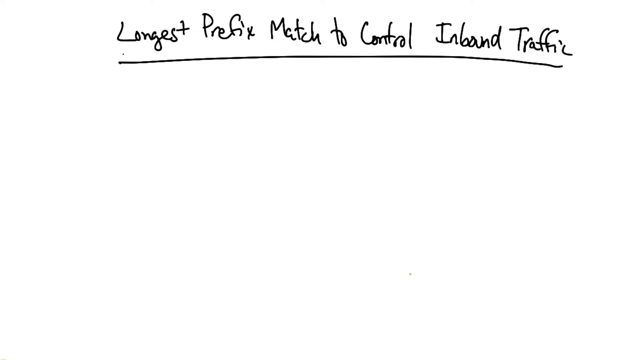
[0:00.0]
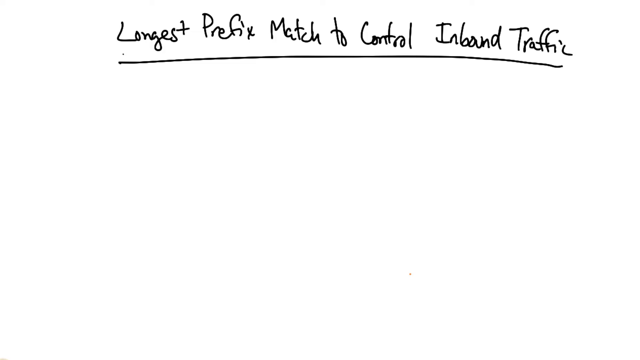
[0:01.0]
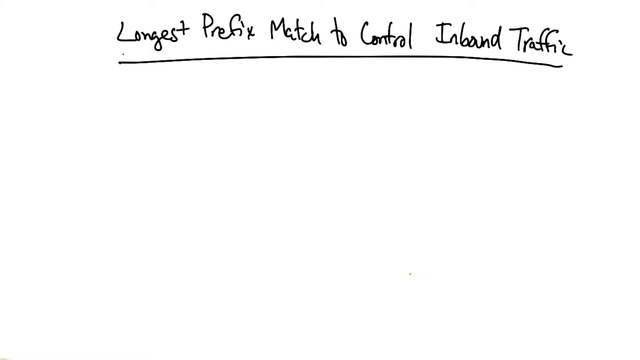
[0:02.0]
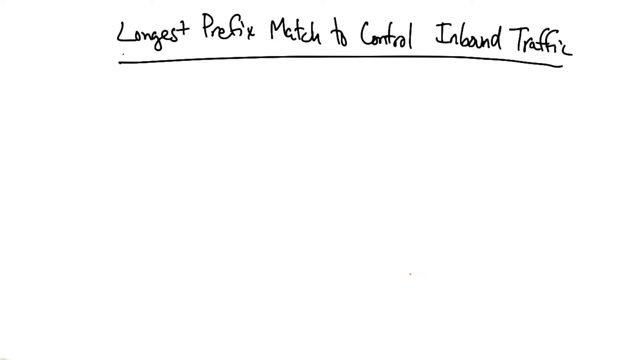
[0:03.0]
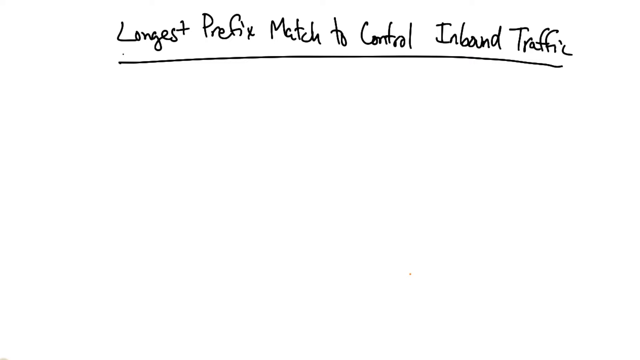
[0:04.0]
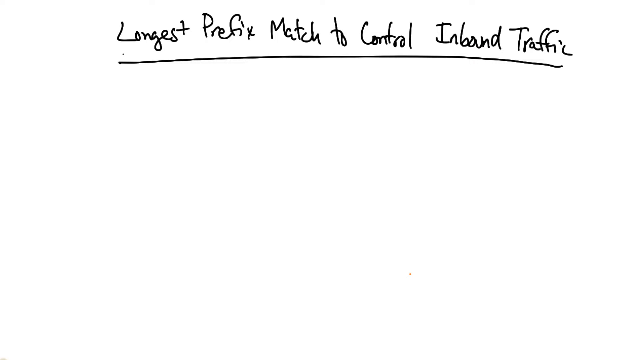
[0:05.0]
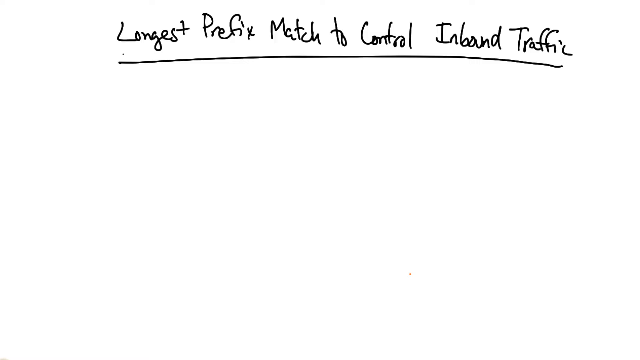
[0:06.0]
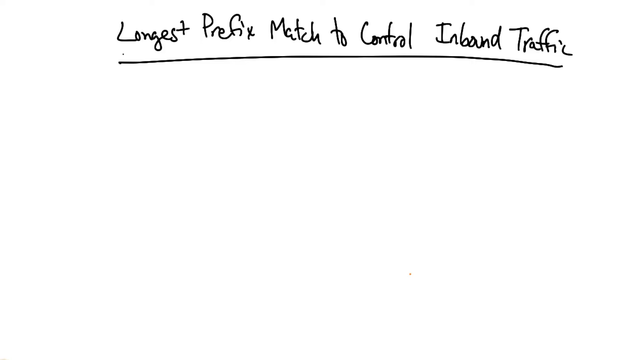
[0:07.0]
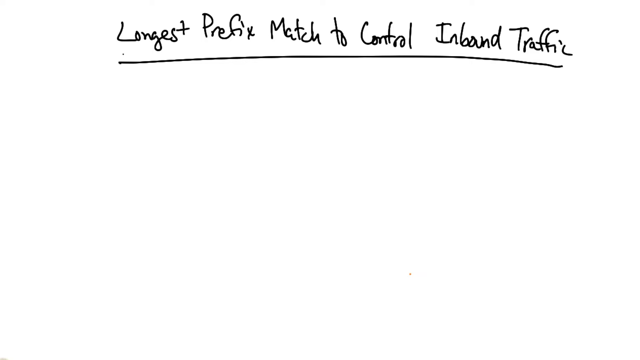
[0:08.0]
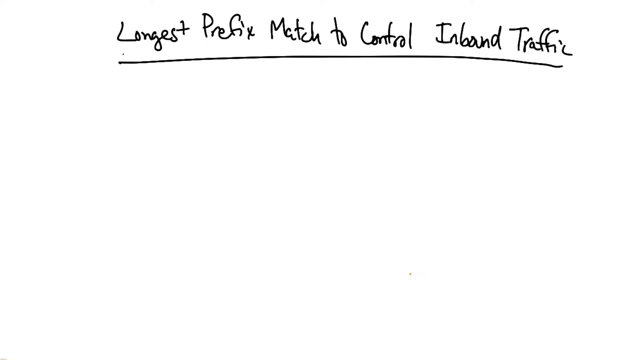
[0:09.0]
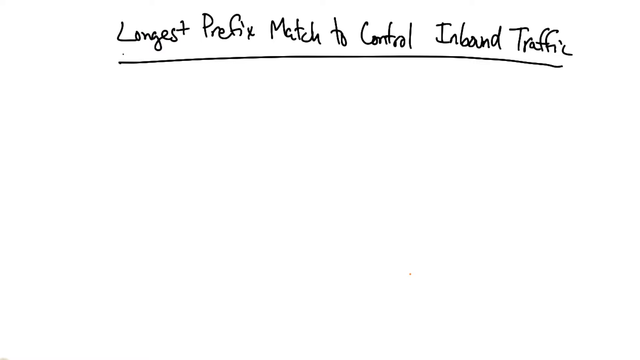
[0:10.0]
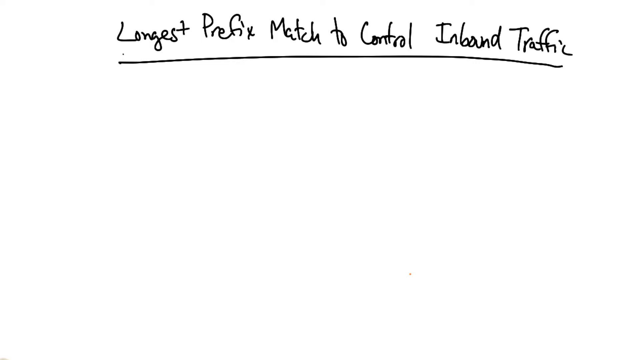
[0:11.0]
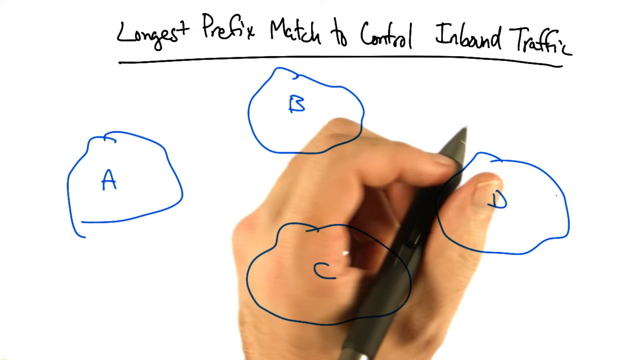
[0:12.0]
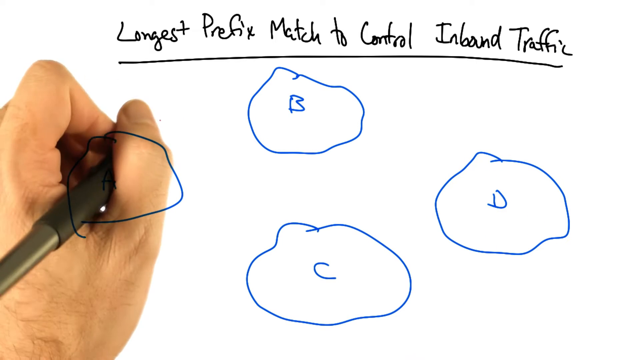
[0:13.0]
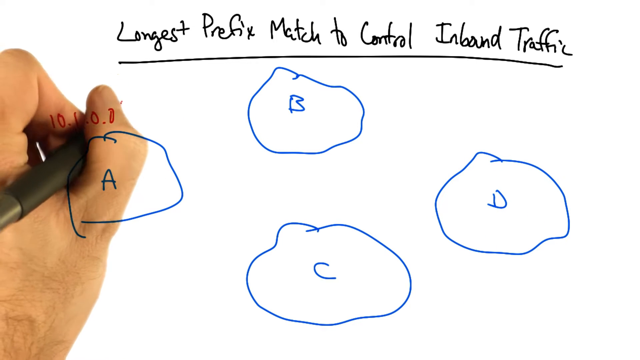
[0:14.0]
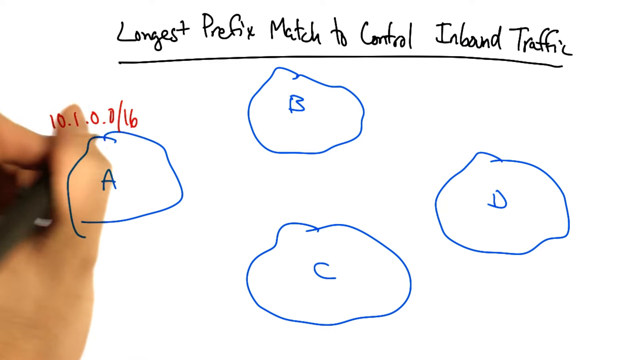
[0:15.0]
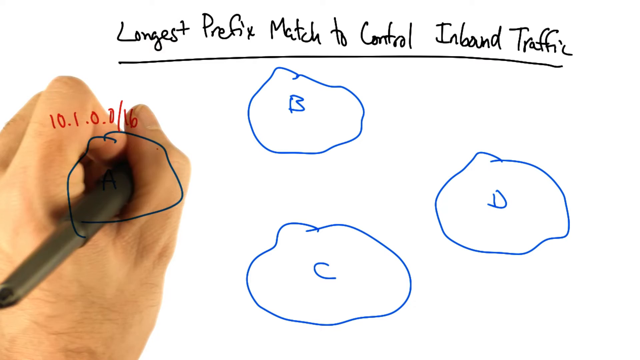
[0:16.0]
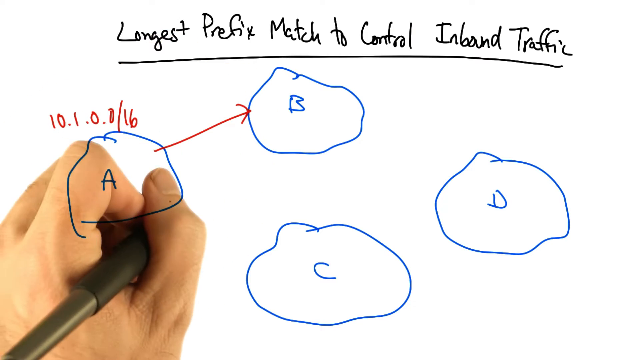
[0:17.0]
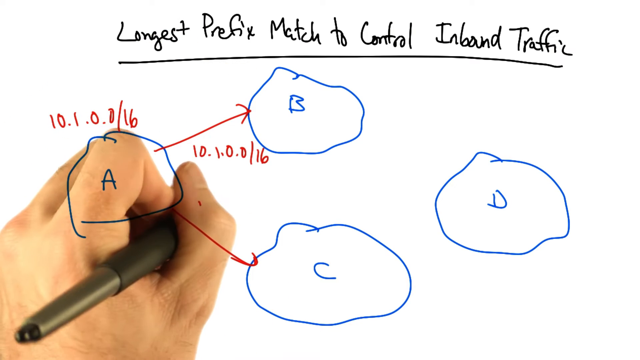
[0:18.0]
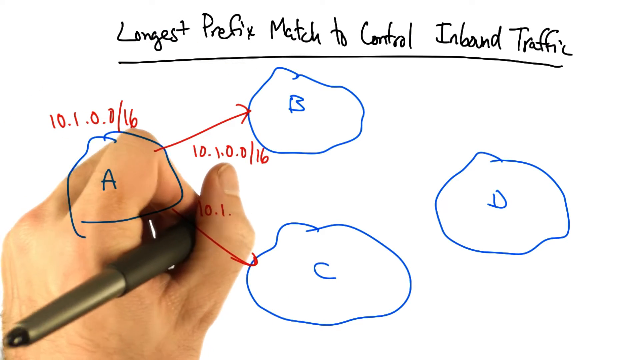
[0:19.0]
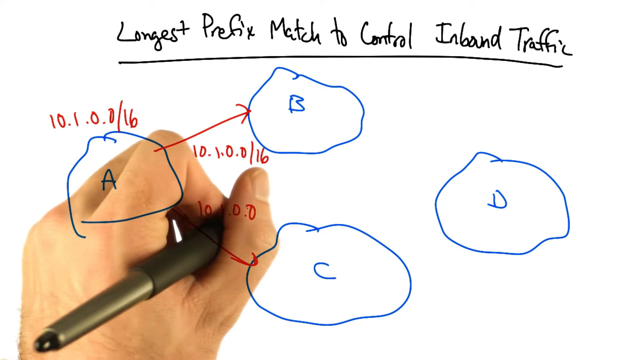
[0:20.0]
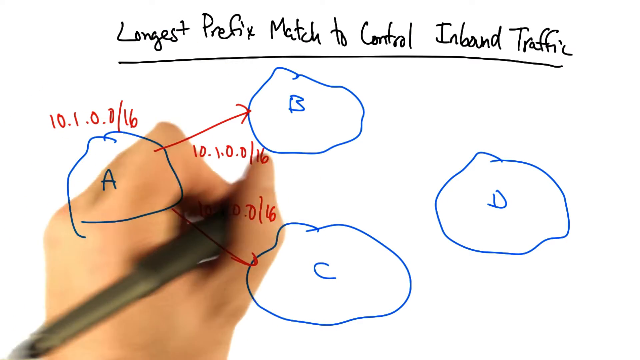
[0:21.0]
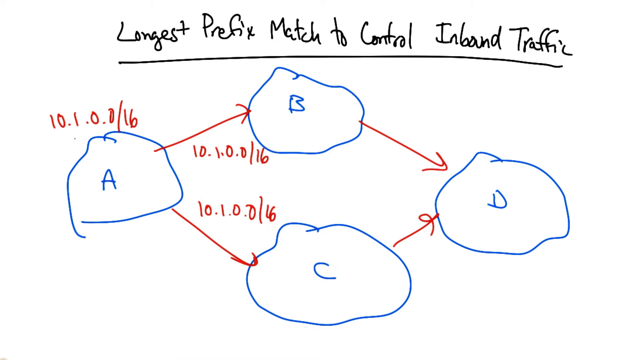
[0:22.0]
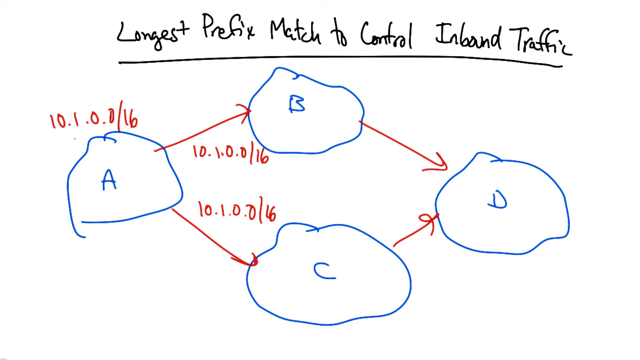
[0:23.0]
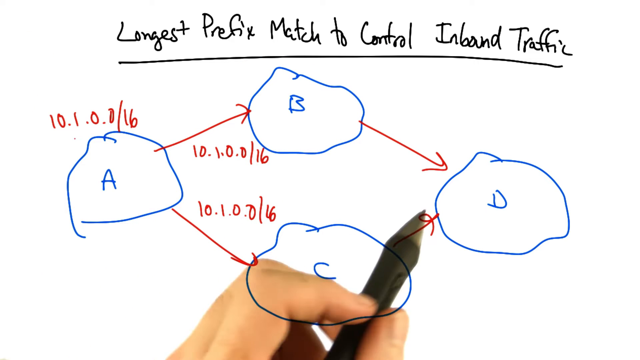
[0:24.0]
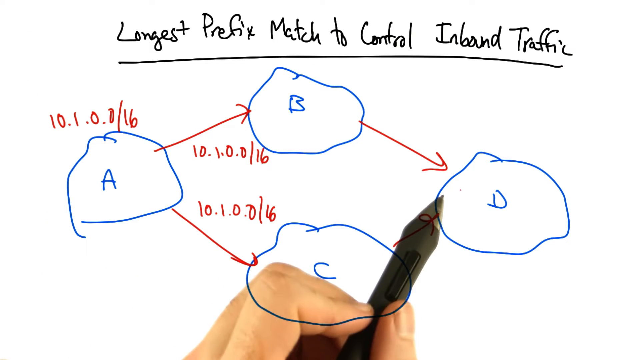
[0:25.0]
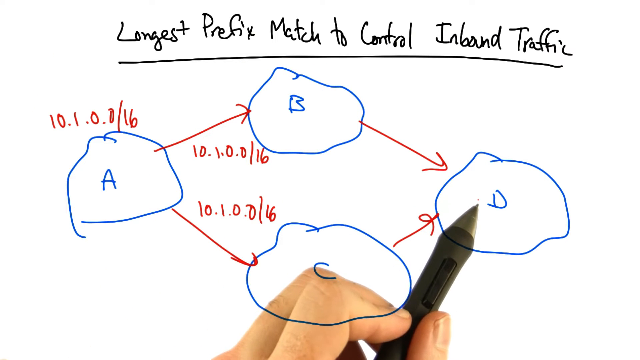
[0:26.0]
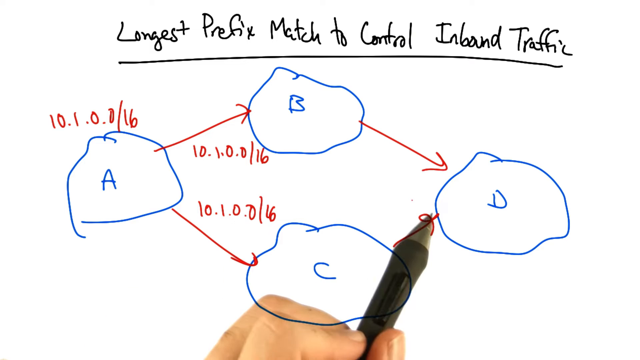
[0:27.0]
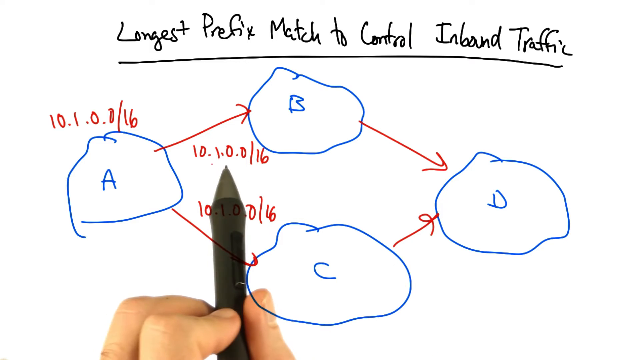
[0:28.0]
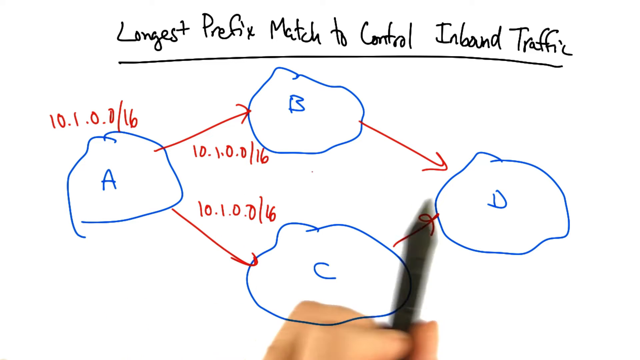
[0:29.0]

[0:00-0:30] The video opens on a white background with black cursive text across the top reading "longest prefix match to control inbound traffic," underlined in black. A hand comes in and starts drawing circles, which are far from round: one on the left labeled A, one up and to the right of it labeled B, one below that labeled C, and one on the right side labeled D. The back of the person's hand, the thumb and the pen are visible. Above A they write "10.1.0.0/16," then draw an arrow up to B and an arrow down to C. They write more numbers; these arrows and numbers are red. They add two red arrows, one from B and one from C, both going to D. The pen then points to D, moves over to the numbers and points back to D, going back and forth a couple of times.